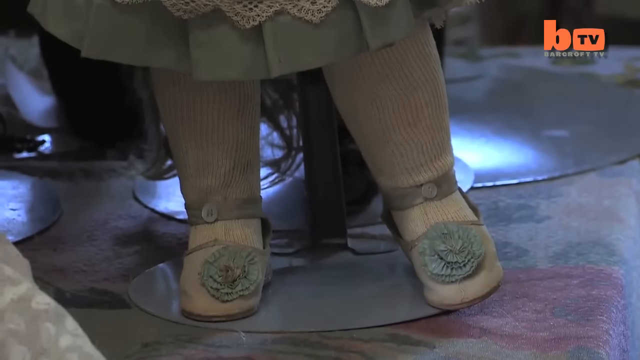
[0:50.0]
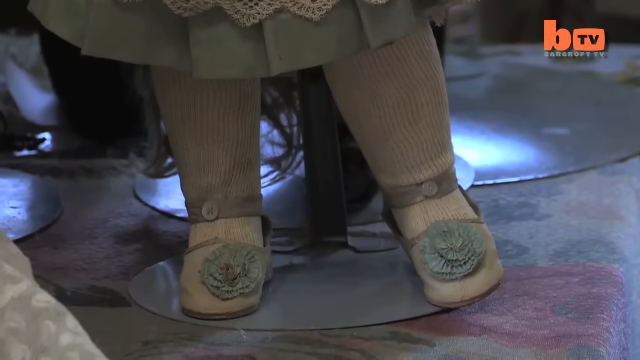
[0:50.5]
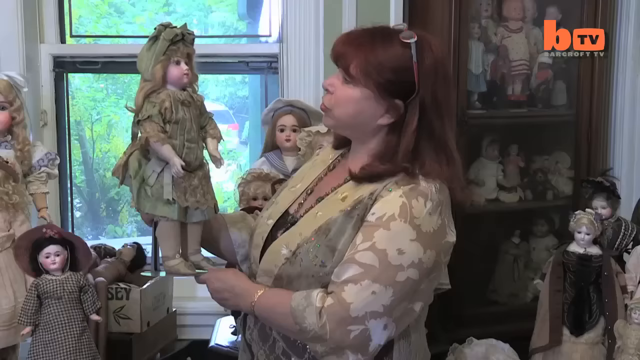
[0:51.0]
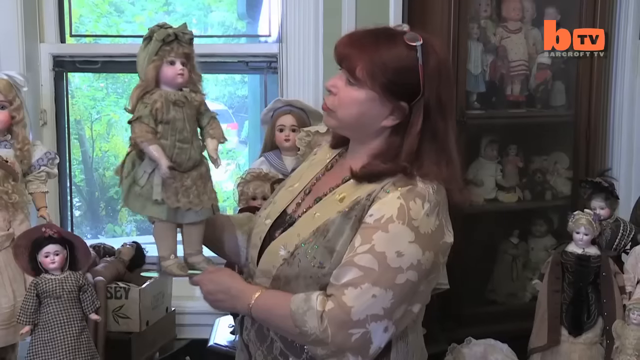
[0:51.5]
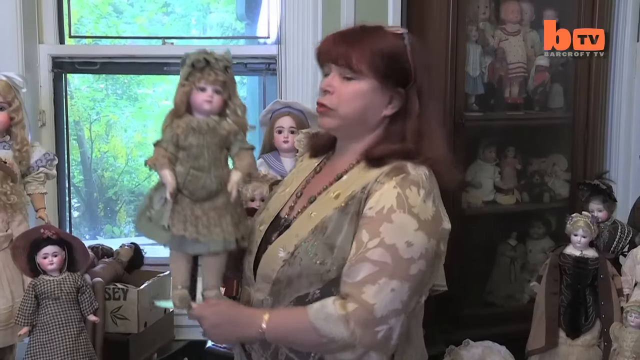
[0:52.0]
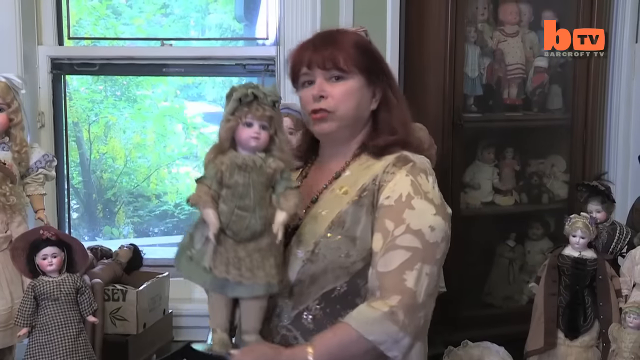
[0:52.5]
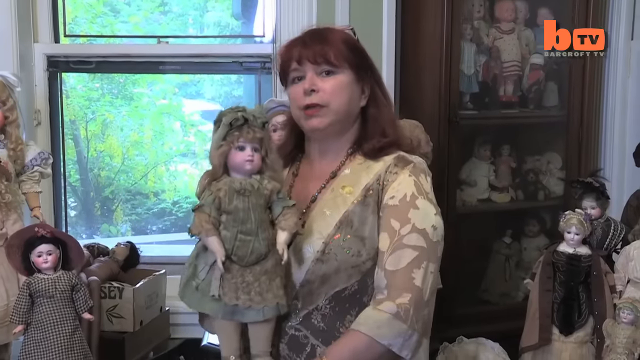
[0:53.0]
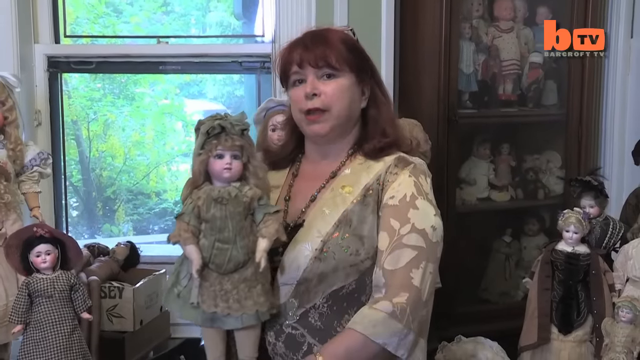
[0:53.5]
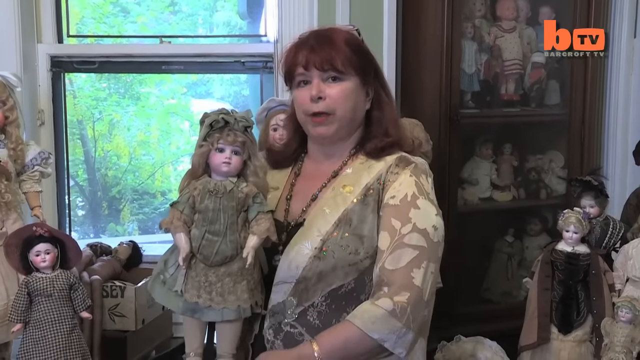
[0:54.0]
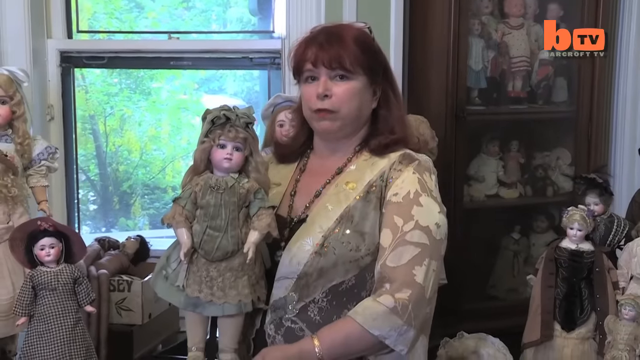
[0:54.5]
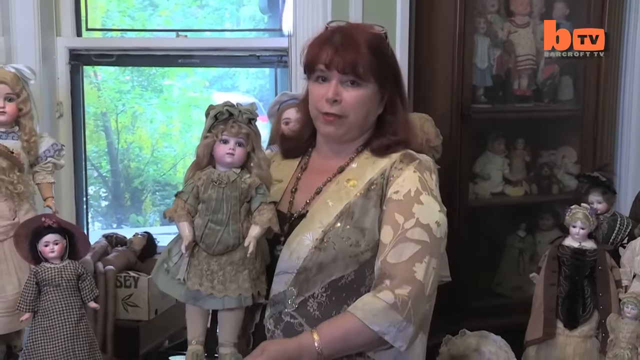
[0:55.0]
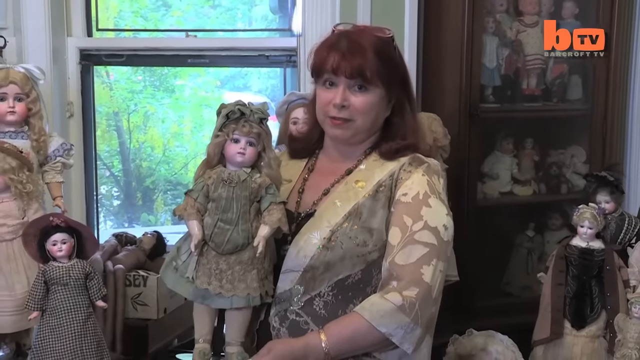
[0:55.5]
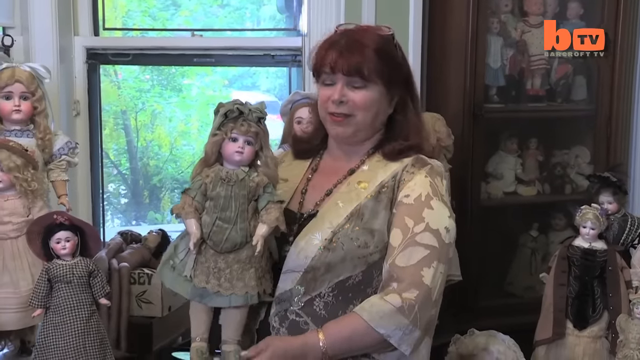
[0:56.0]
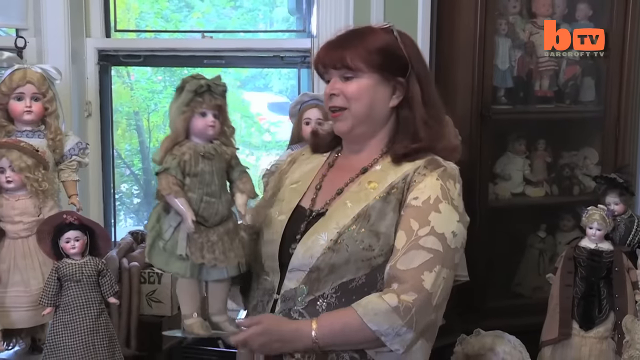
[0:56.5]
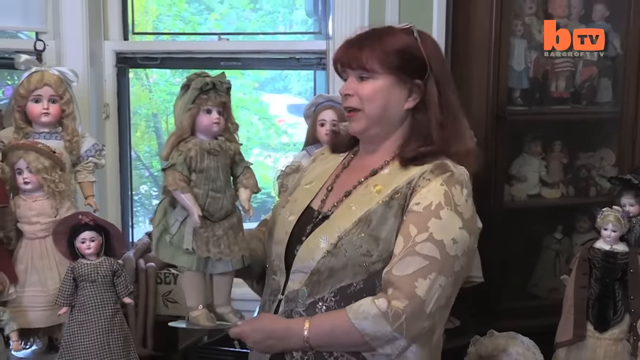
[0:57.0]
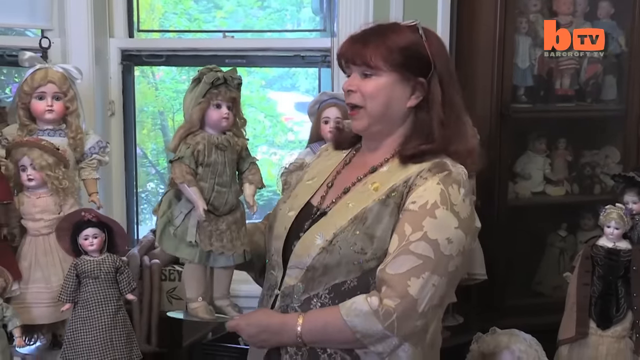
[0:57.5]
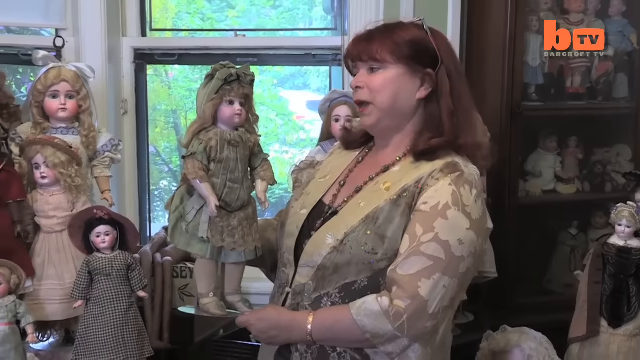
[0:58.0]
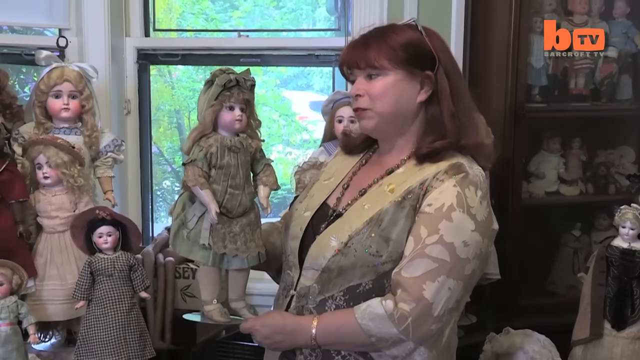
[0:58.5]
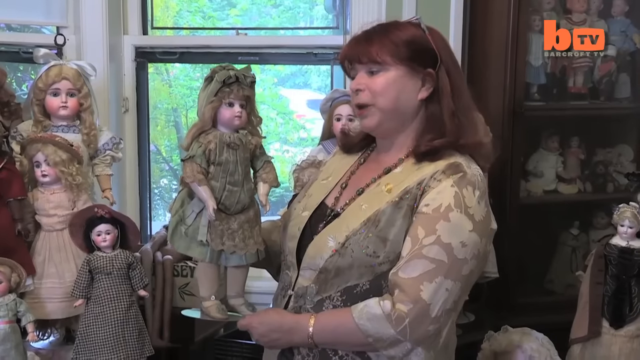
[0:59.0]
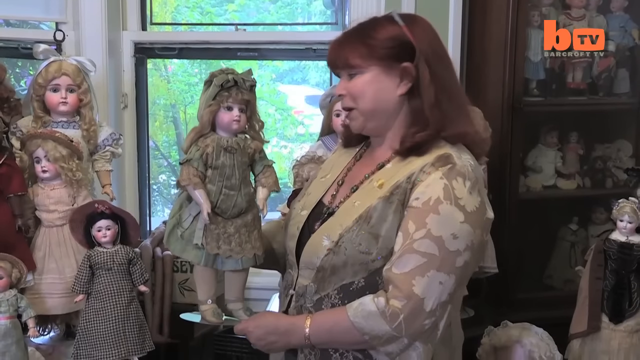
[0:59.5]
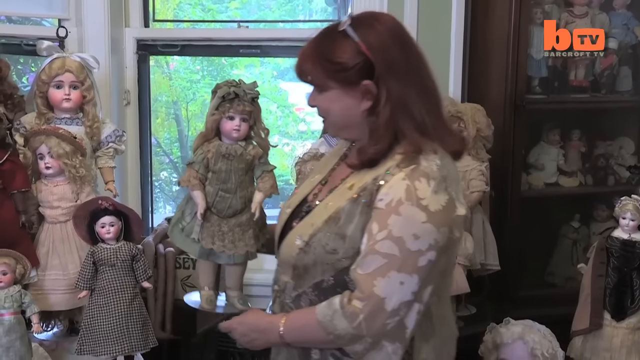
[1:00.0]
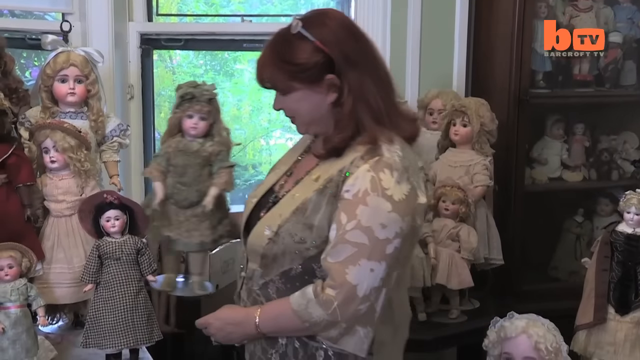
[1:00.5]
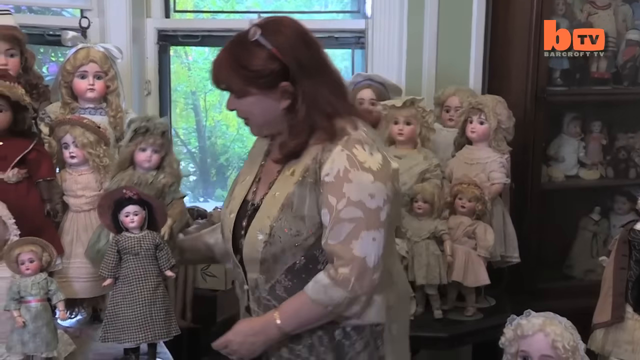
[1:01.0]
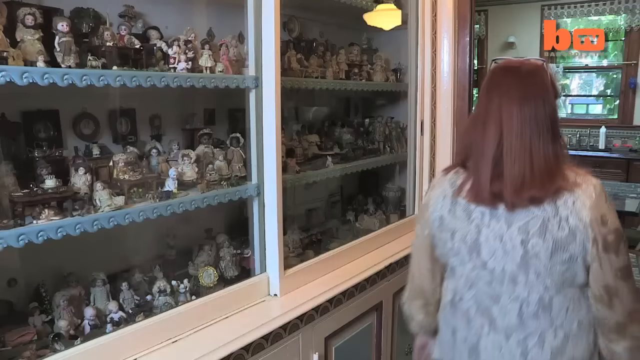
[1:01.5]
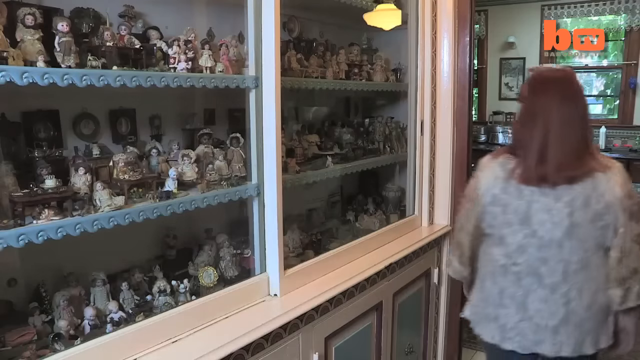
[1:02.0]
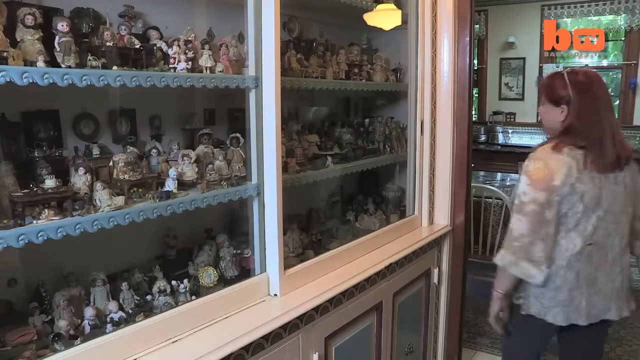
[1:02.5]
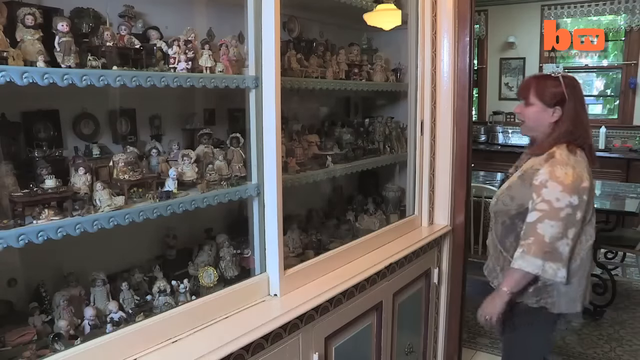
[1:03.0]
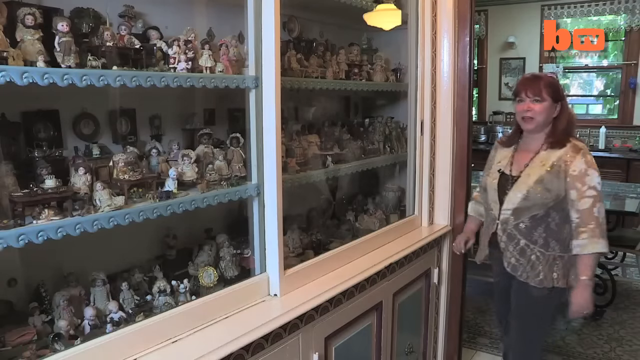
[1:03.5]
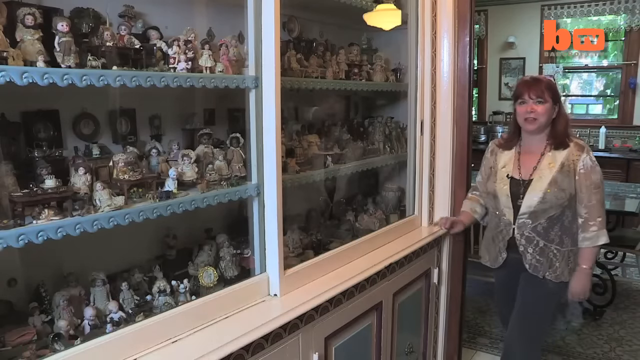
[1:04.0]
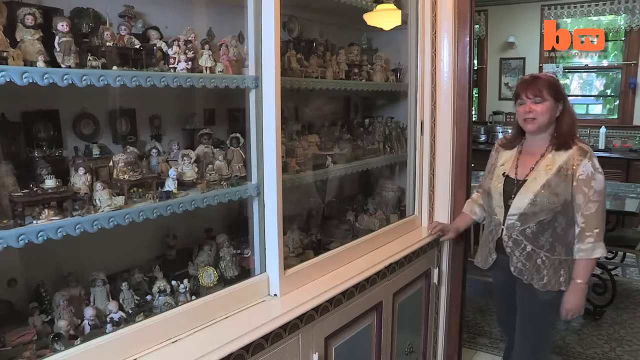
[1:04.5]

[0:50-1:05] The woman is shown from a side view, holding one of the dolls, which wears a dark green dress and is about two feet tall. She begins to speak and moves the doll closer to her so that she and the doll are side by side. In the background is an open window letting in a lot of light blue light, with trees visible outside. In the bottom left corner is a doll wearing a hat; in the bottom right corner are two dolls wearing black; and on the right-hand side is a storage cabinet with three shelves, with dolls on each shelf. The woman continues talking about the doll. The camera then cuts to the woman walking, seen from behind, and she turns around; beside her are even more dolls on shelves in a very large cabinet with glass doors.